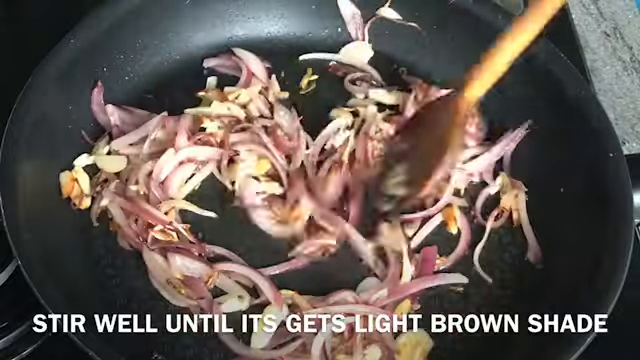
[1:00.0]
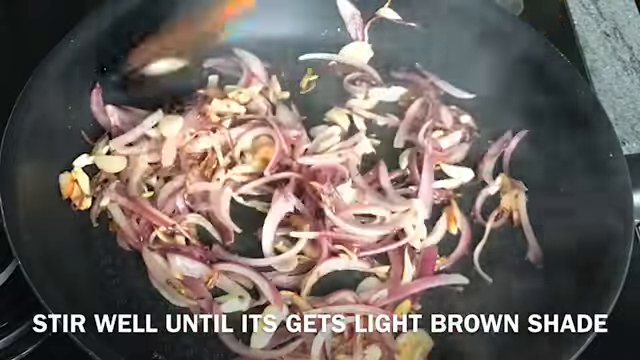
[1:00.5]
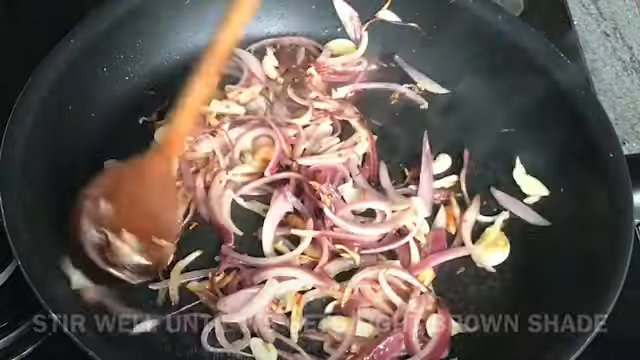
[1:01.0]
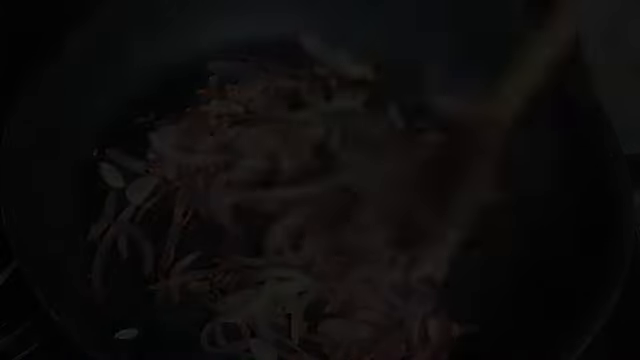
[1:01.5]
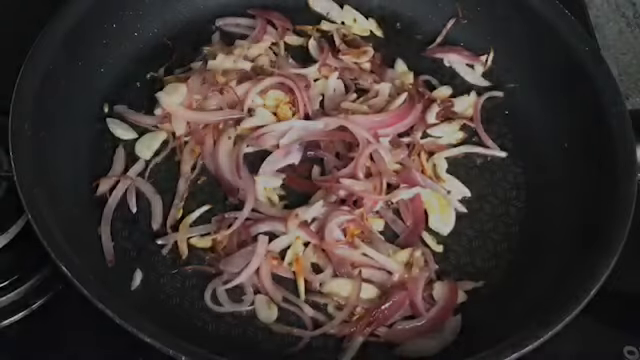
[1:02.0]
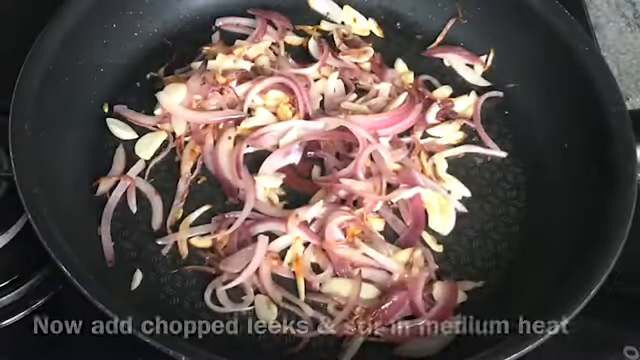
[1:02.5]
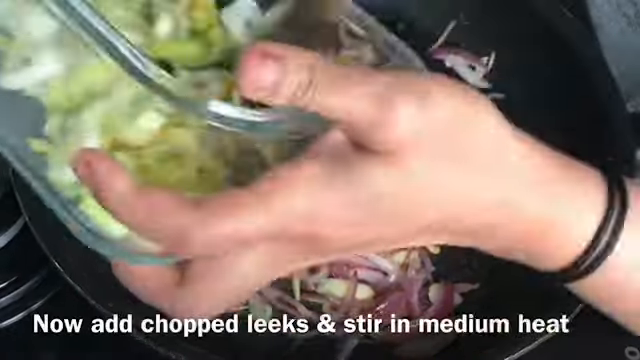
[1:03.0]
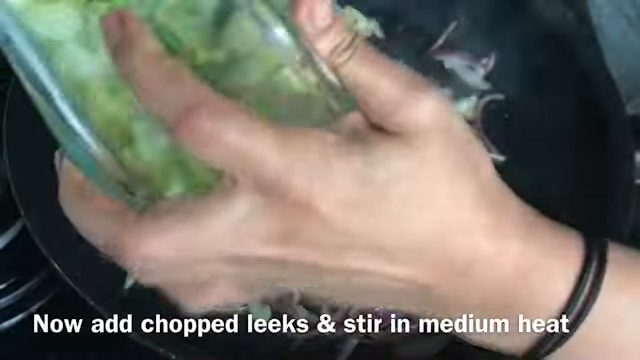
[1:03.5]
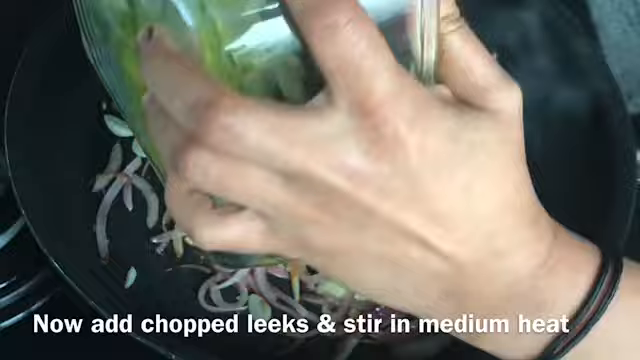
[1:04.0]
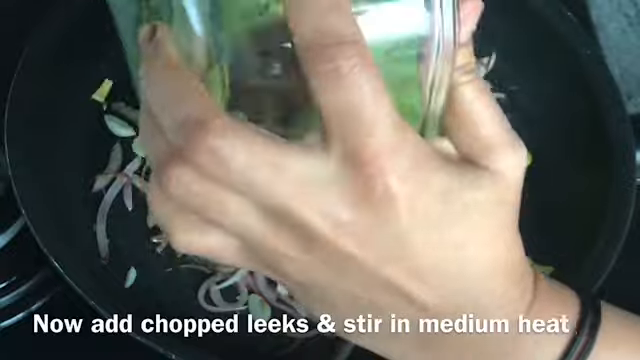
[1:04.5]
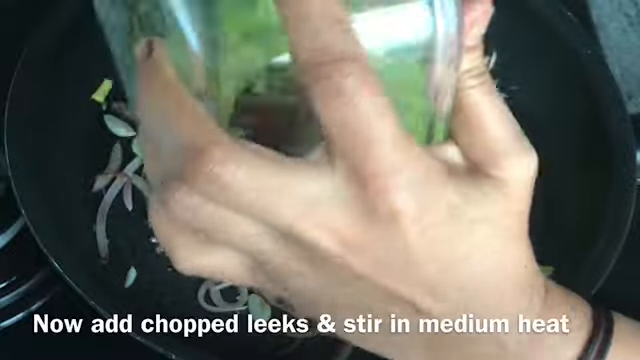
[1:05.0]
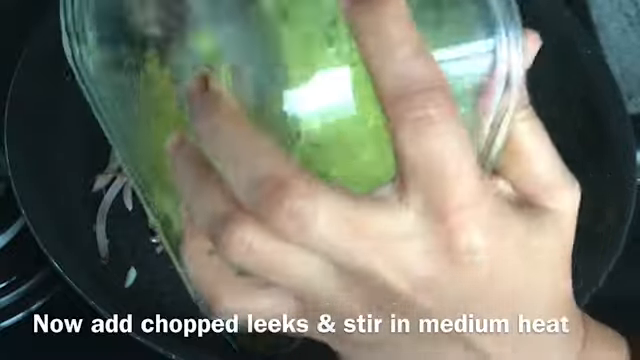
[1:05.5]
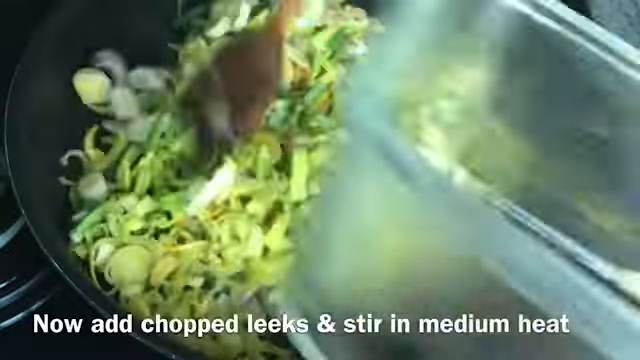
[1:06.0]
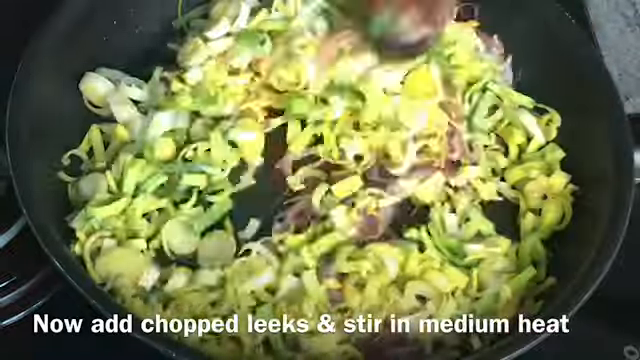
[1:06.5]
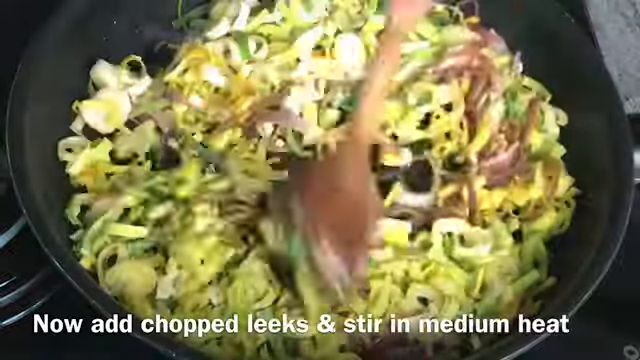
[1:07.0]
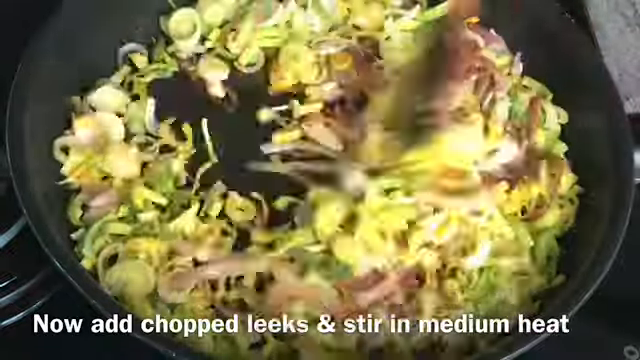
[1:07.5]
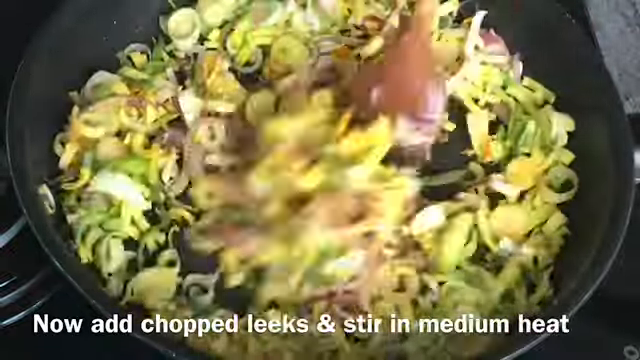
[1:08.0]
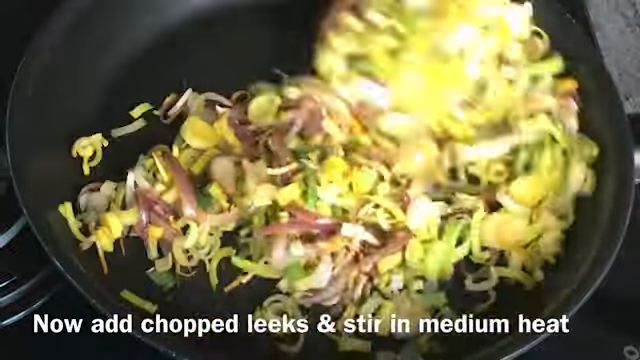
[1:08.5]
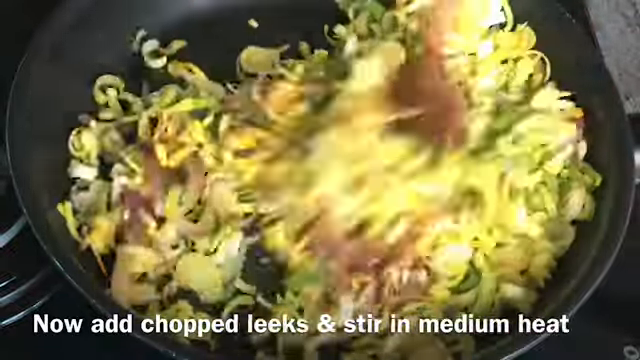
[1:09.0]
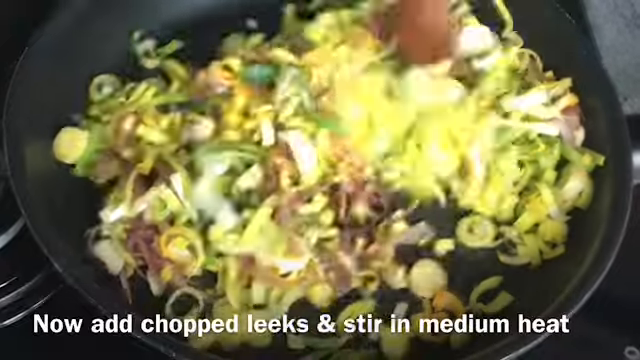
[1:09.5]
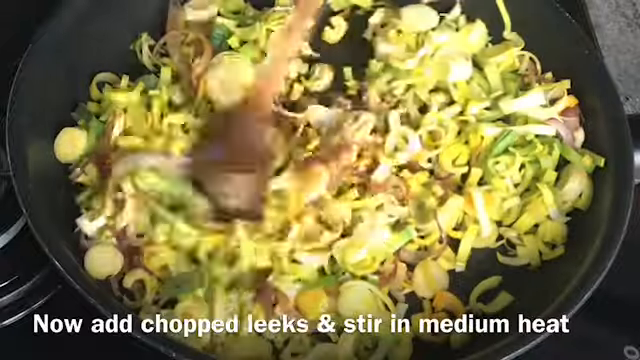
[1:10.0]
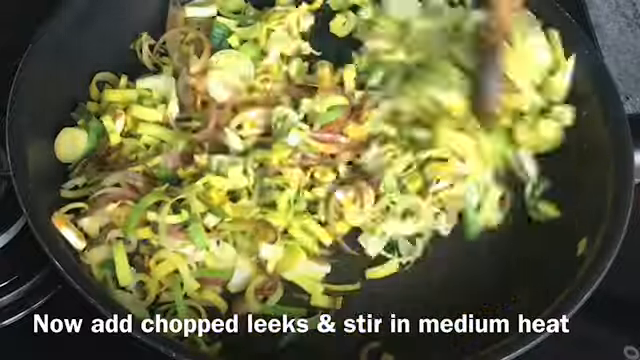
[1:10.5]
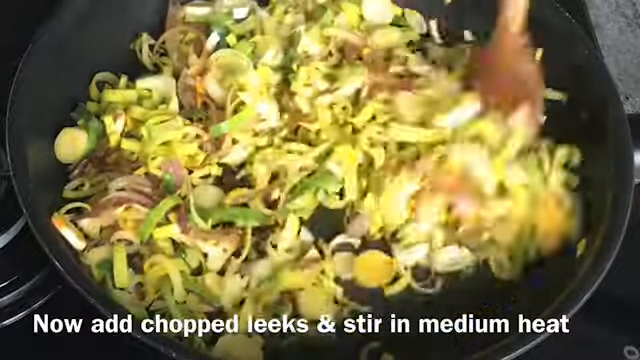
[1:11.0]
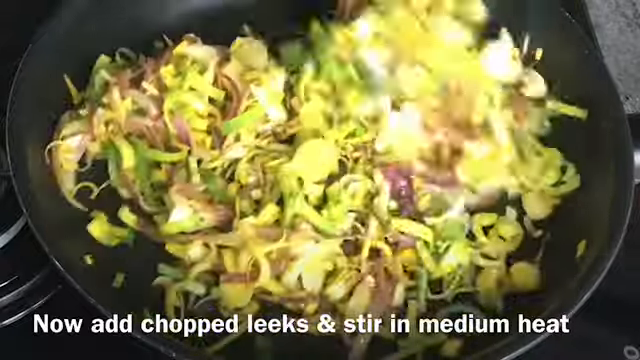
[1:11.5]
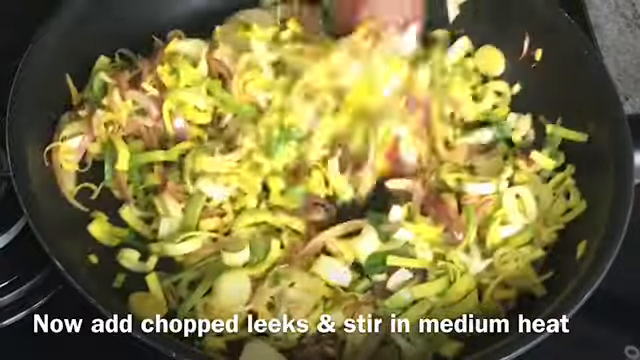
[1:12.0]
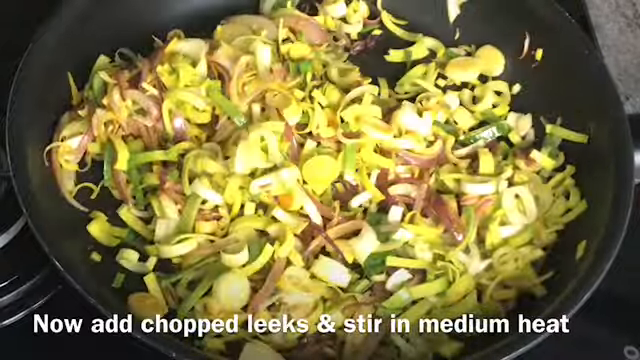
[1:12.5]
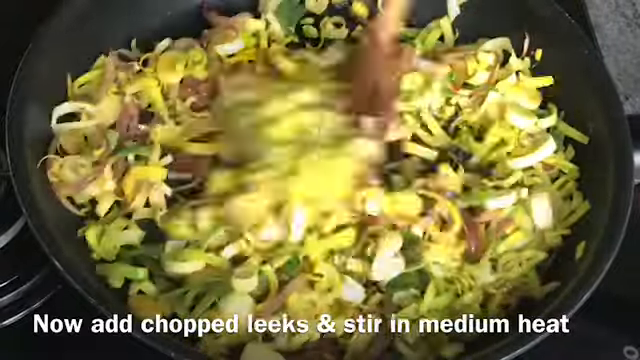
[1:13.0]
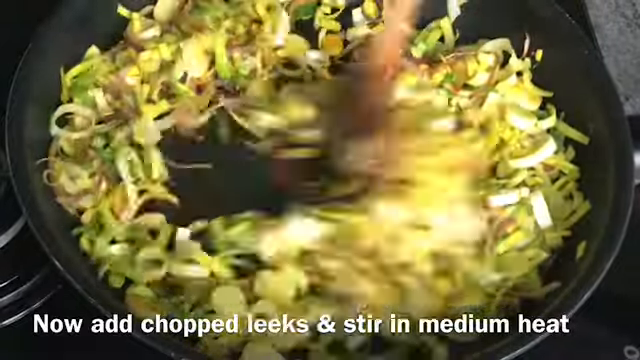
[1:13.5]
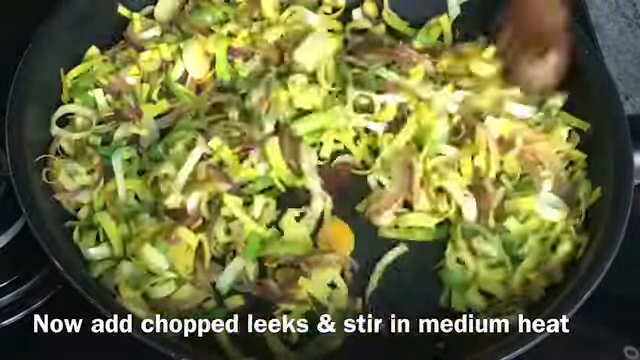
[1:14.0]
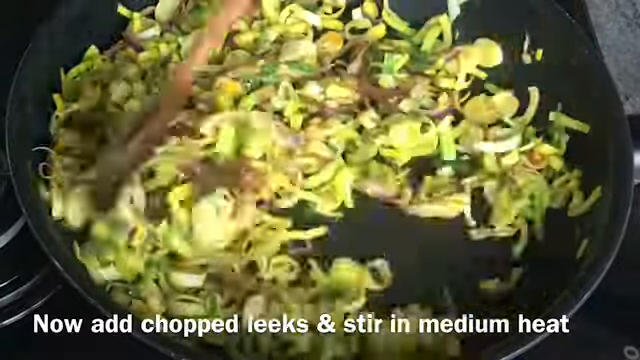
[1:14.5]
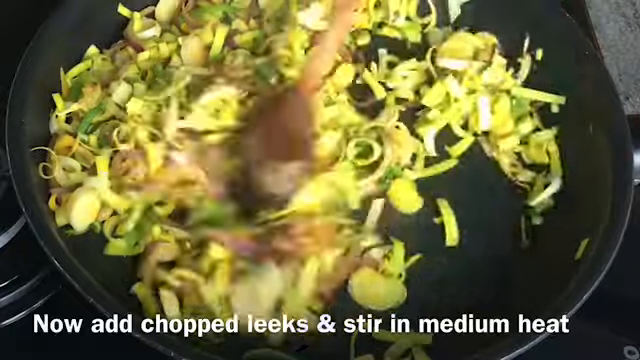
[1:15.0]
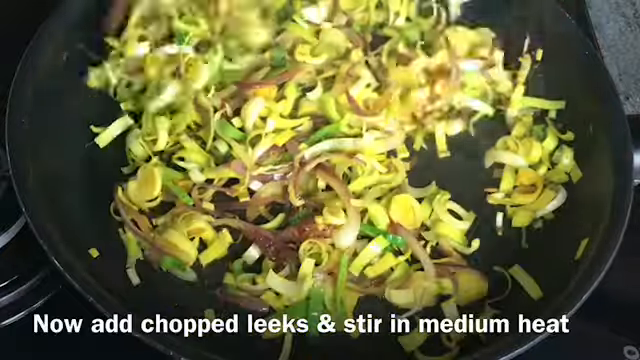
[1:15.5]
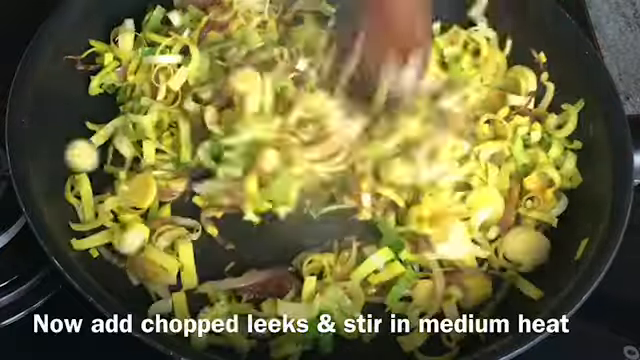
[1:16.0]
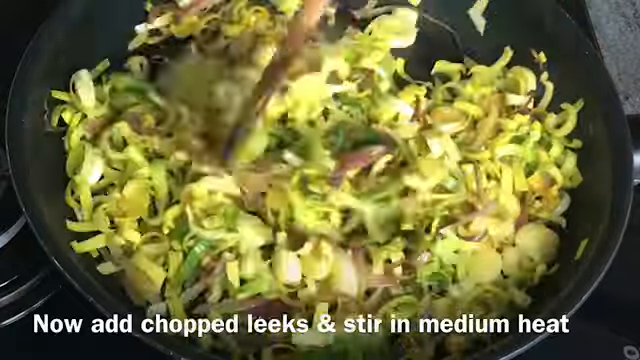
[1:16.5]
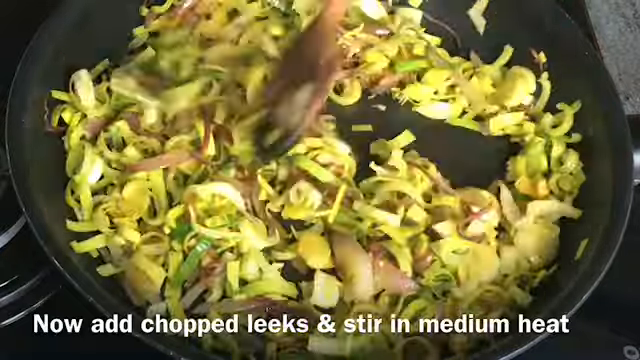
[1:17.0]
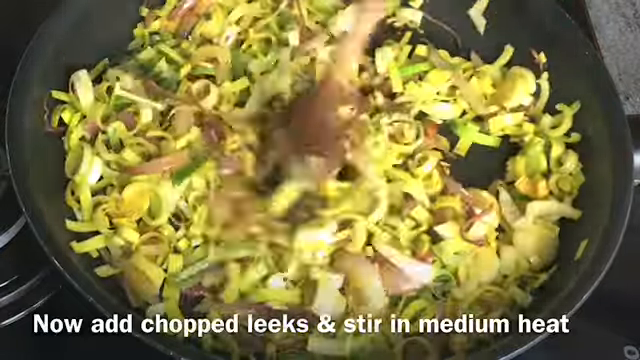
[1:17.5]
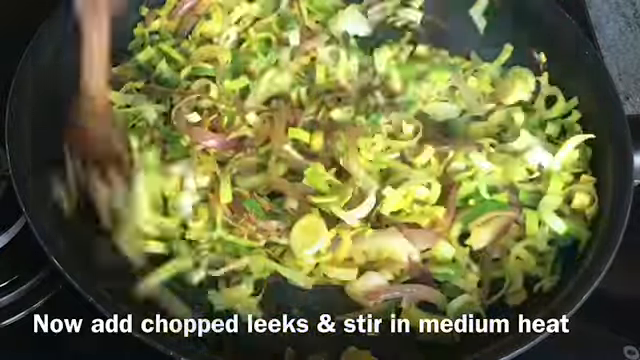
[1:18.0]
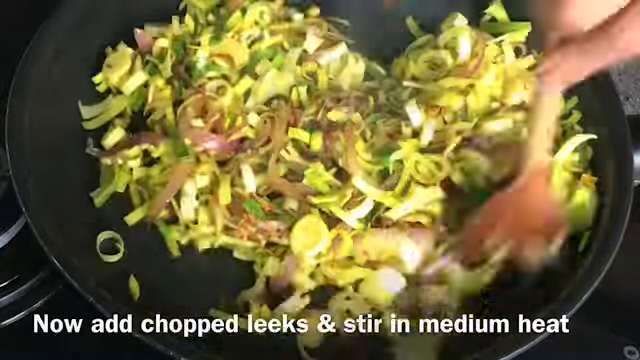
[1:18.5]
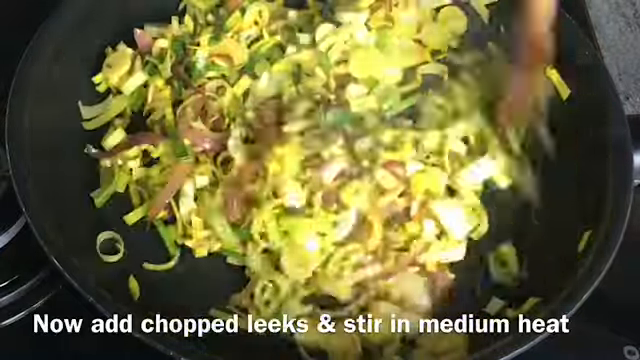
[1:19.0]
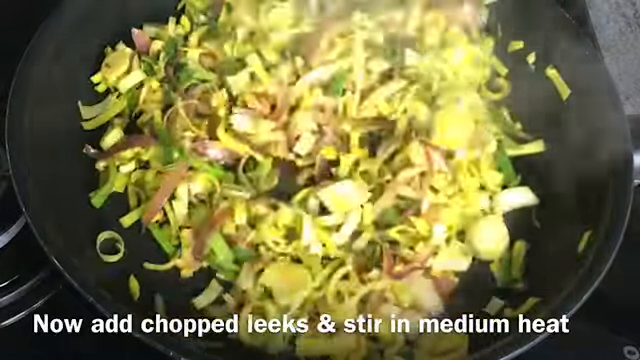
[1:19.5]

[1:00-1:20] For a few seconds the red onion and garlic are still being stirred. Then white text at the bottom of the video reads "Now add chopped leeks and stir in medium heat." The leeks, kind of a light green, maybe a slightly yellowish light green, come from a rectangular glass container that looks maybe like Pyrex; as they are poured in, the back of the hand is toward the camera. The leeks are stirred into the red onion and garlic with the same wooden spoon as before, scooping around from the outside of the pan in a circular motion to bring everything kind of into the middle, then stirring back and forth again in a crisscross pattern.